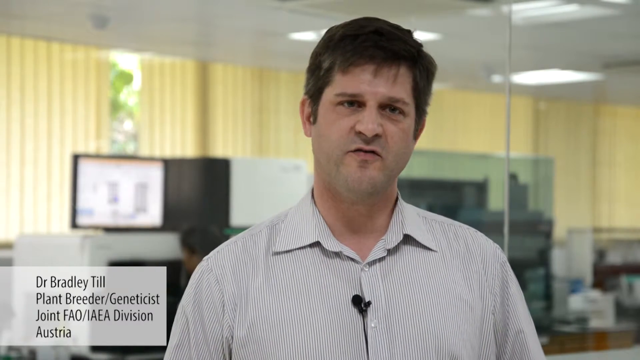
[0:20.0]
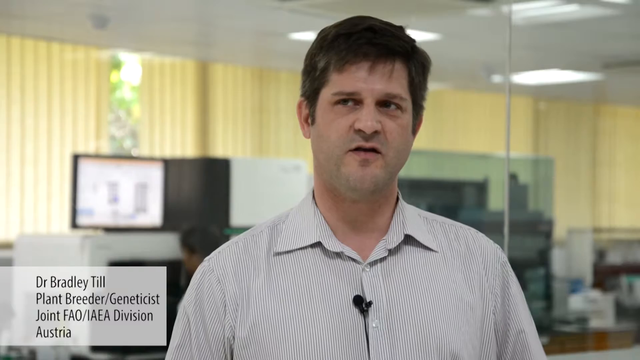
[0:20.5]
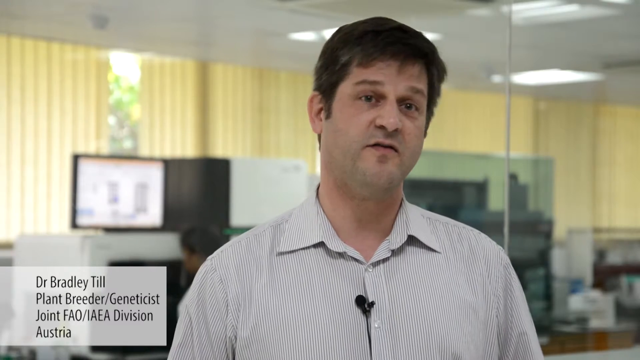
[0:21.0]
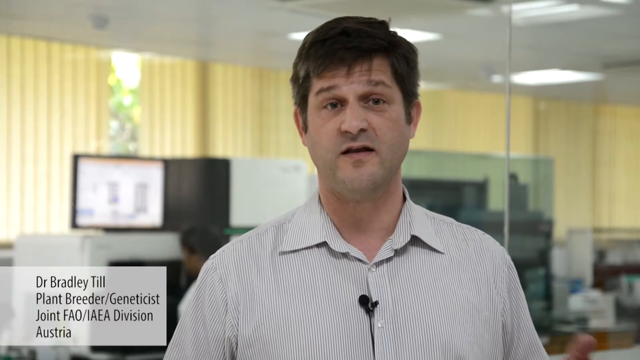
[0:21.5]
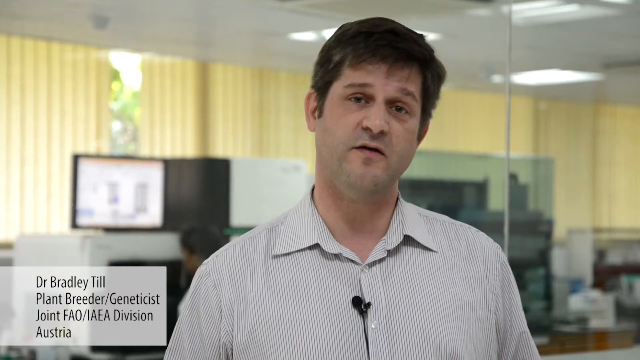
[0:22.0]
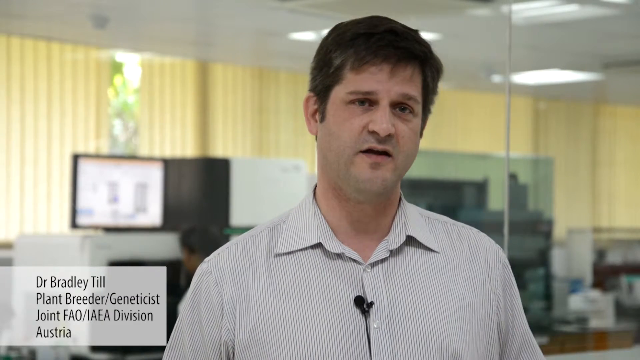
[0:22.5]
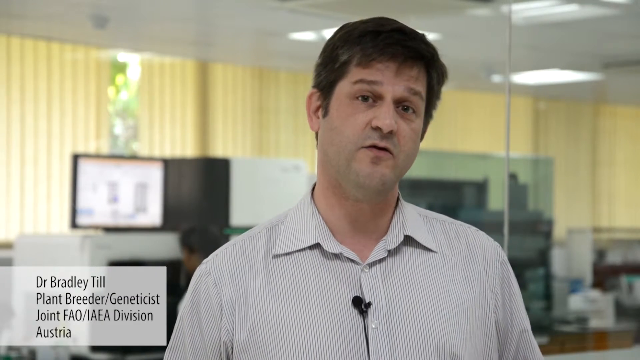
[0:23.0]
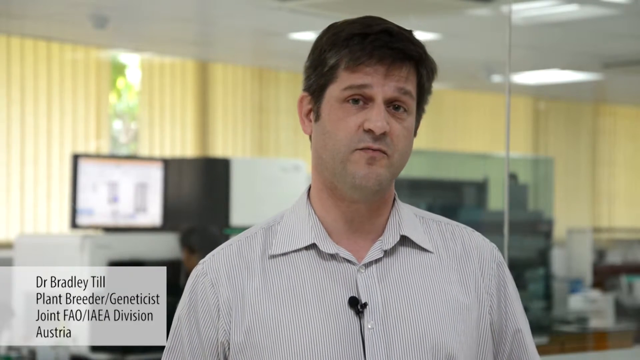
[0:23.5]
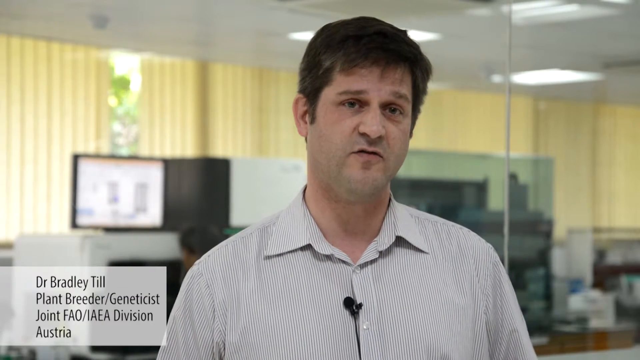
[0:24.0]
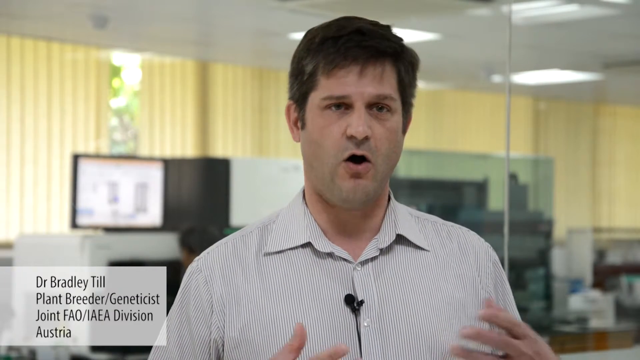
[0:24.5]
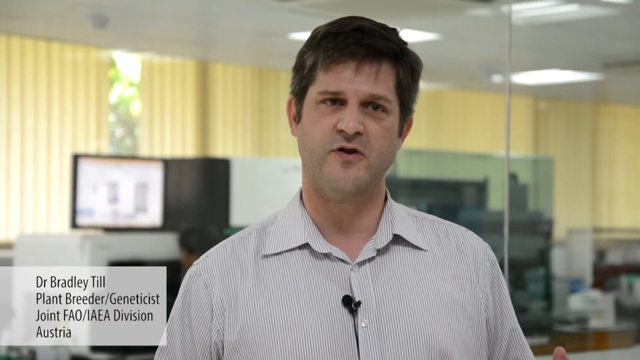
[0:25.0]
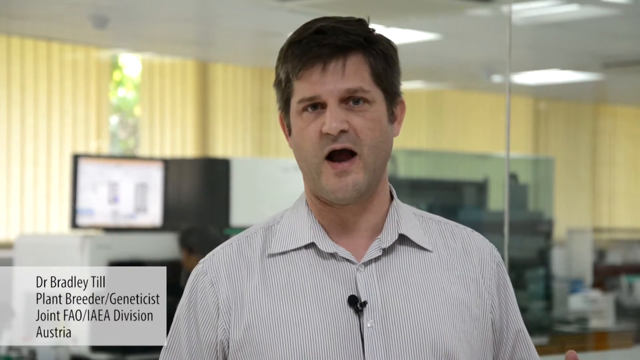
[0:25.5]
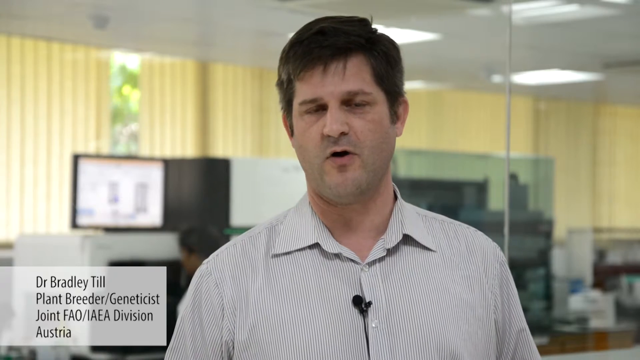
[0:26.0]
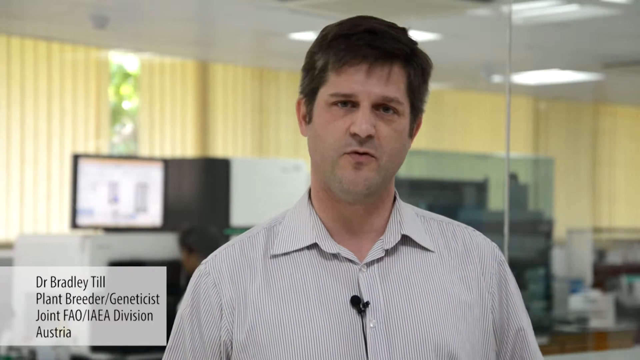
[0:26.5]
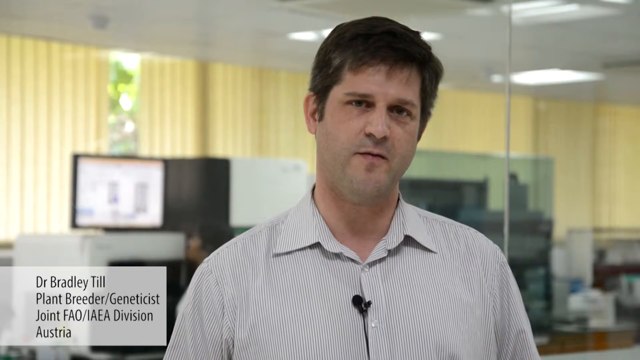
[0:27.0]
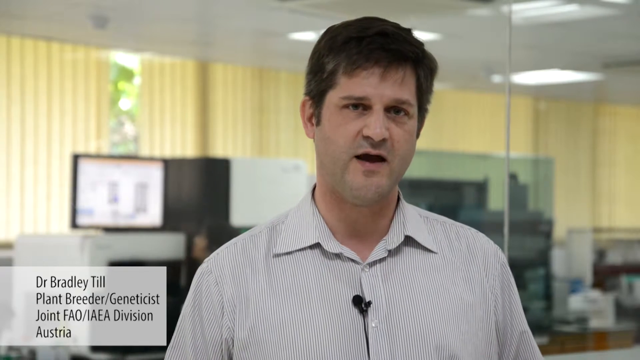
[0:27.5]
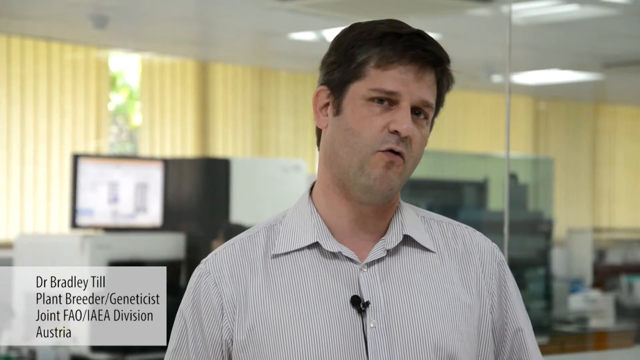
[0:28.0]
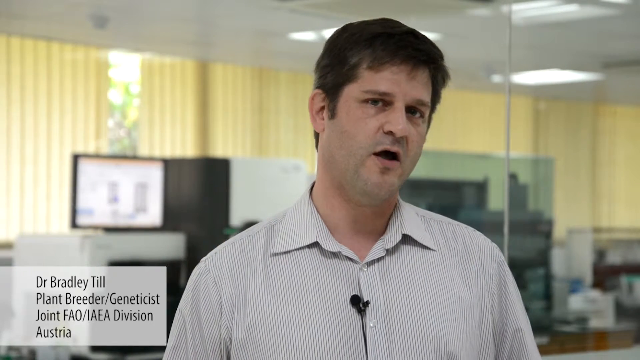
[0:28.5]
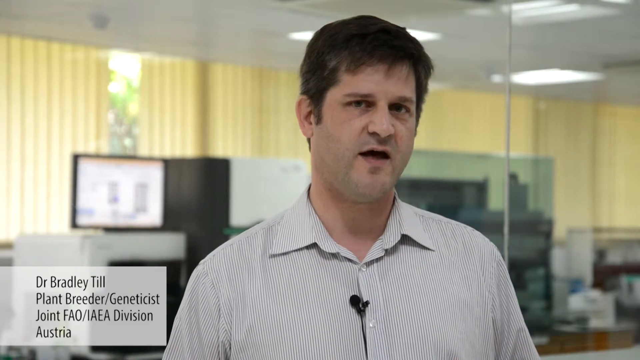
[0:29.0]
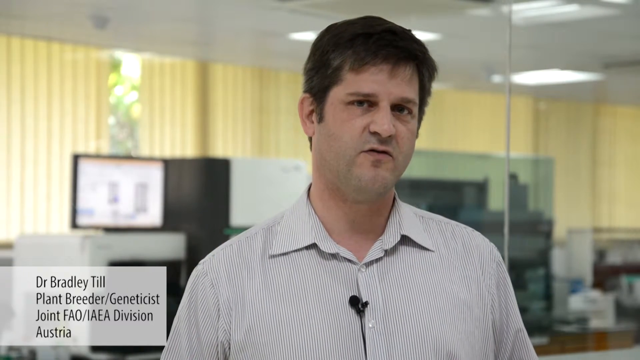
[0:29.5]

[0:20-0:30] Dr. Bradley Till is identified by a small light gray box in the bottom left-hand corner as a plant breeder and geneticist with the joint FAO/IAEA division in Austria. He looks to be in his late 30s or early 40s and wears a light gray button-down shirt with thin, darker gray vertical stripes. He has dark brown hair, kind of longer on top and shorter on the sides, and brown eyes. He speaks with a mostly neutral expression, sometimes raising his eyebrows as he talks. He appears to be in some type of office environment, with other people in the background sitting at desks working on computers.